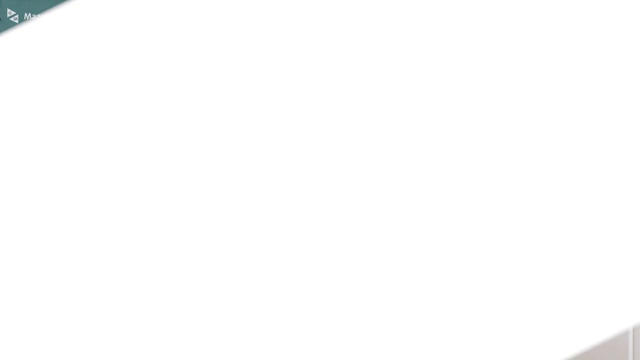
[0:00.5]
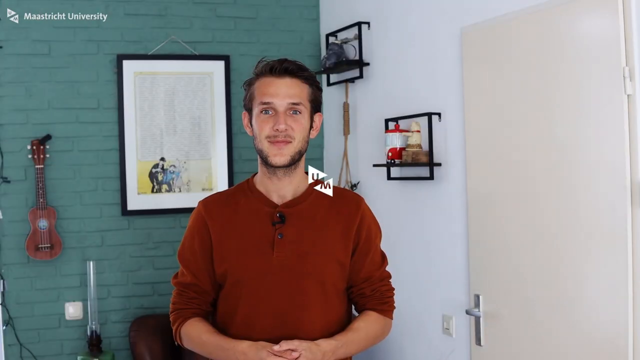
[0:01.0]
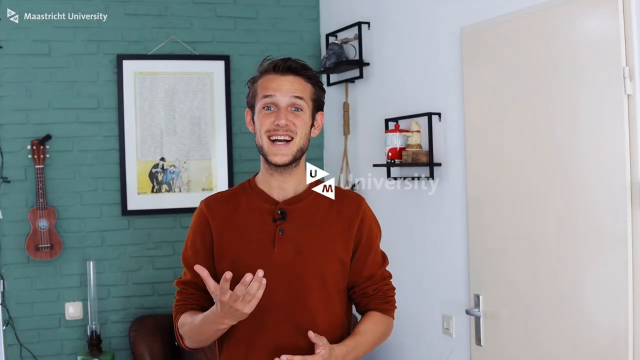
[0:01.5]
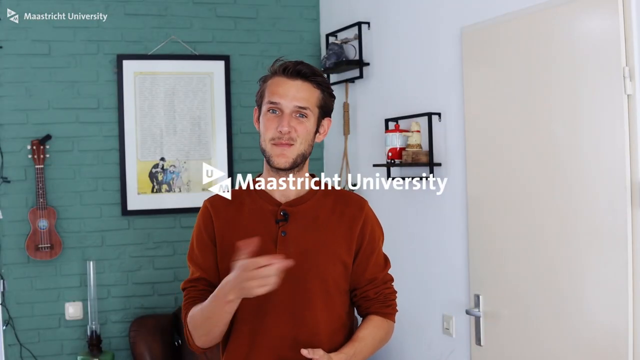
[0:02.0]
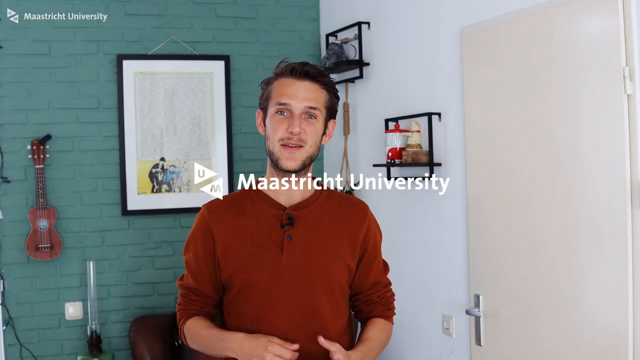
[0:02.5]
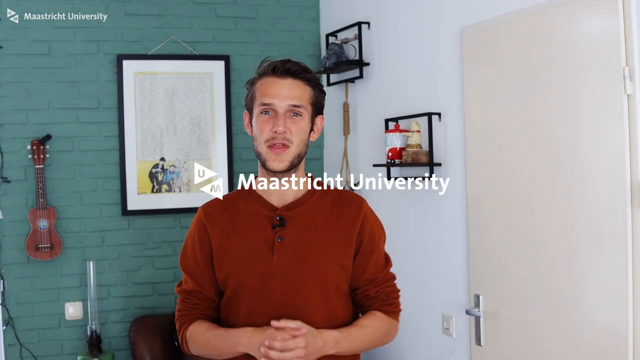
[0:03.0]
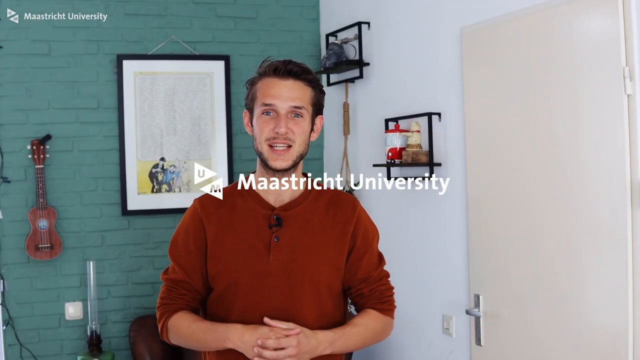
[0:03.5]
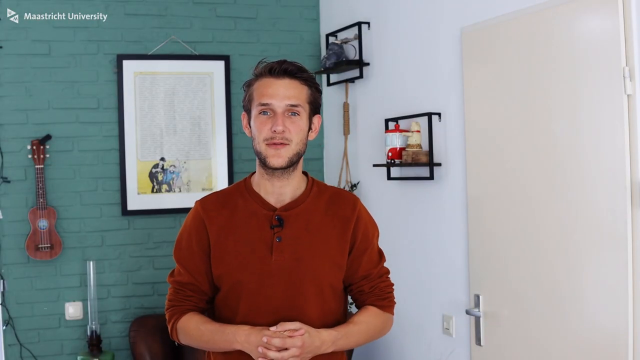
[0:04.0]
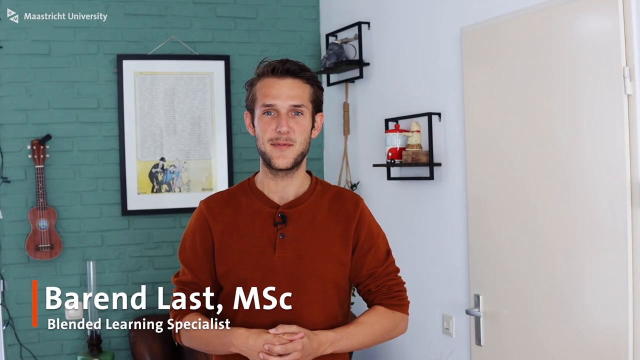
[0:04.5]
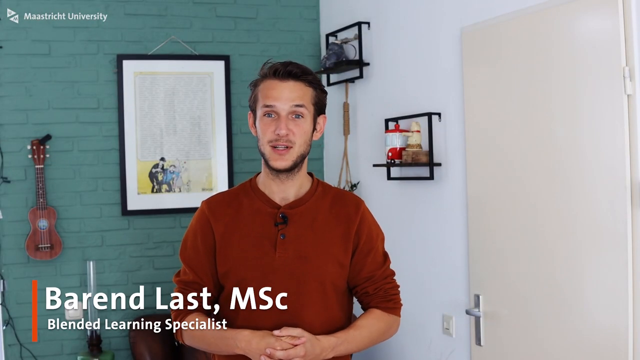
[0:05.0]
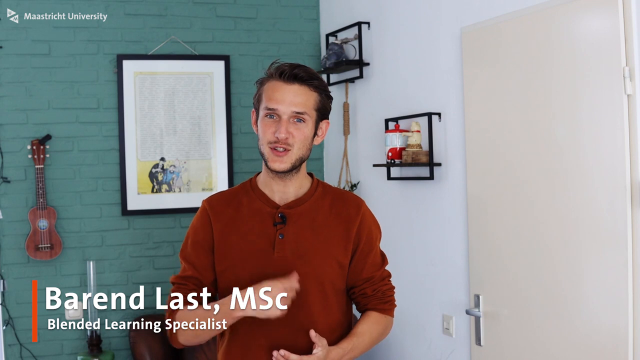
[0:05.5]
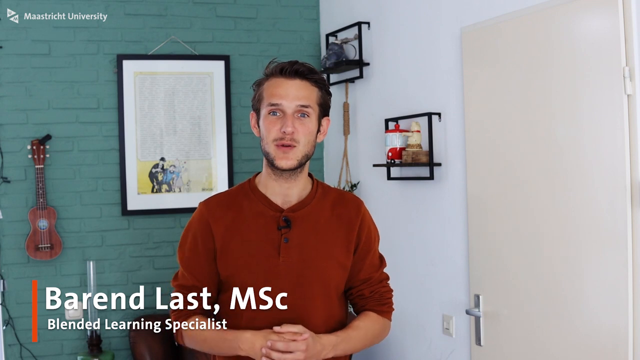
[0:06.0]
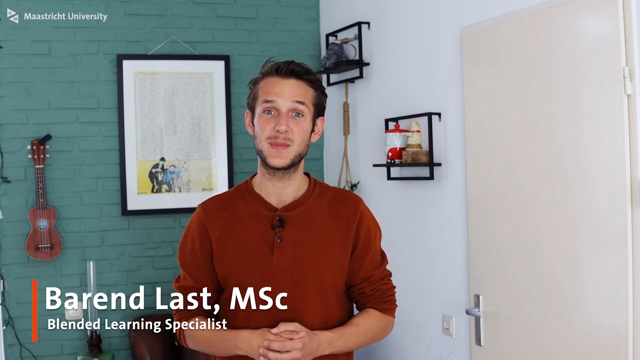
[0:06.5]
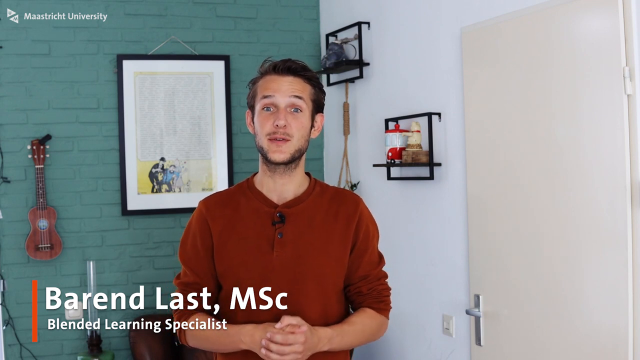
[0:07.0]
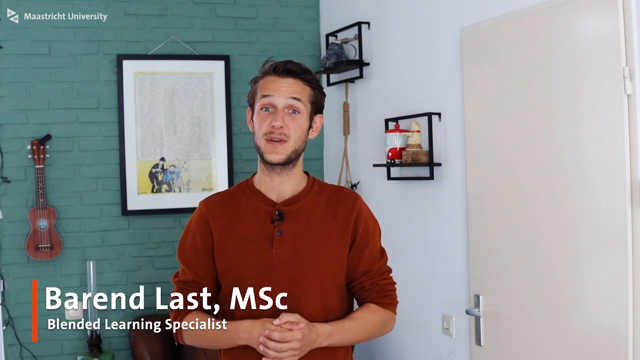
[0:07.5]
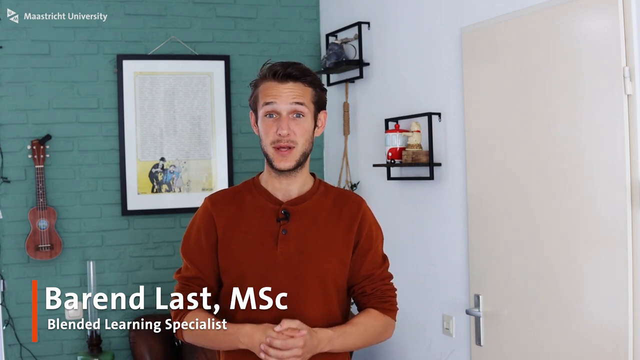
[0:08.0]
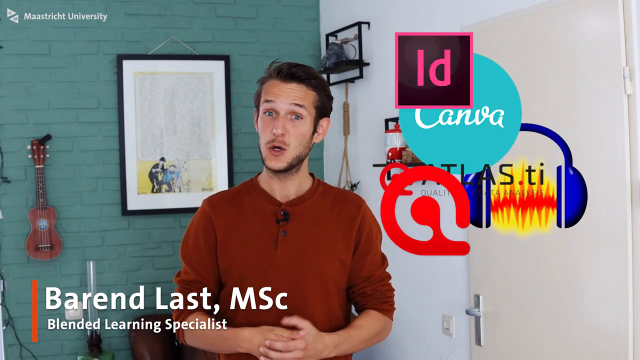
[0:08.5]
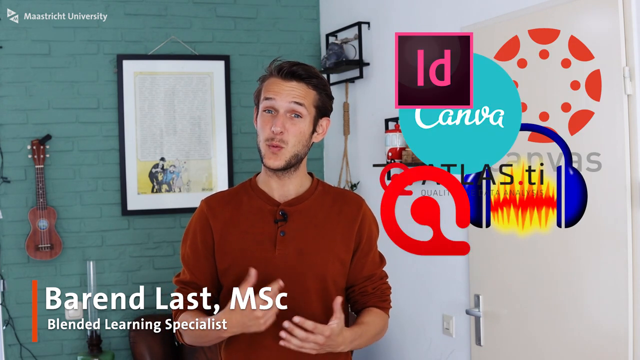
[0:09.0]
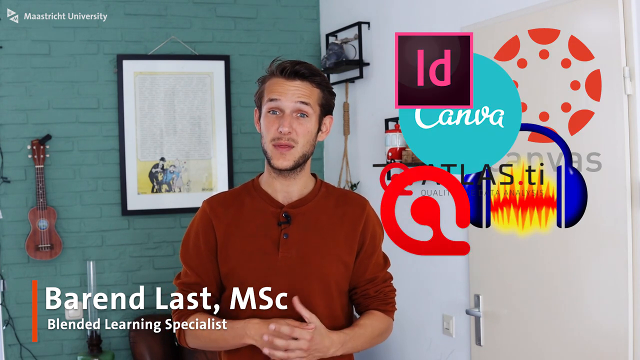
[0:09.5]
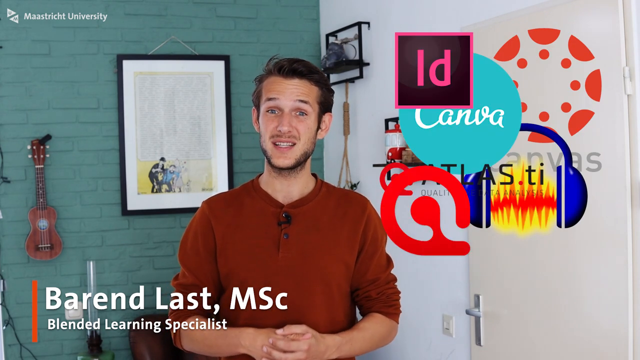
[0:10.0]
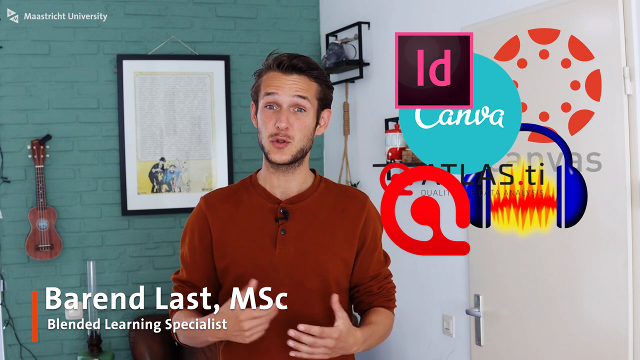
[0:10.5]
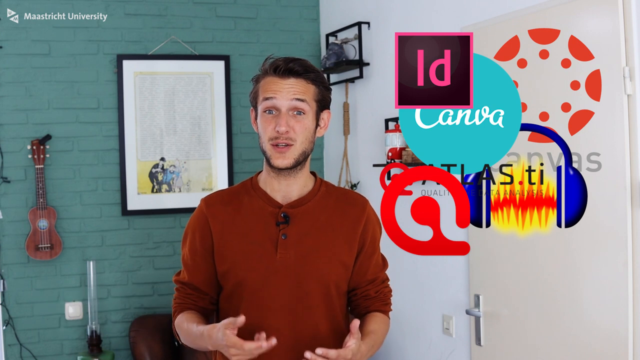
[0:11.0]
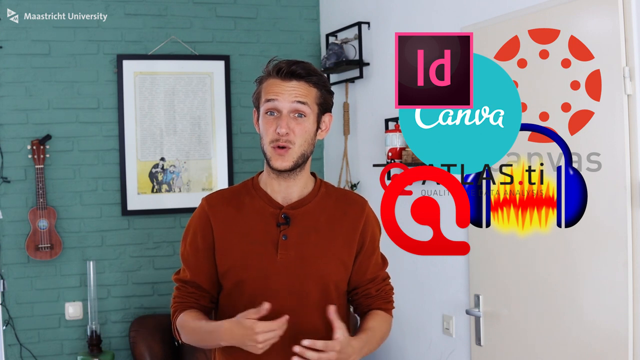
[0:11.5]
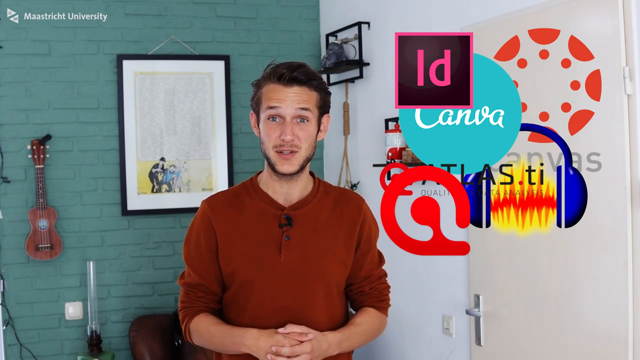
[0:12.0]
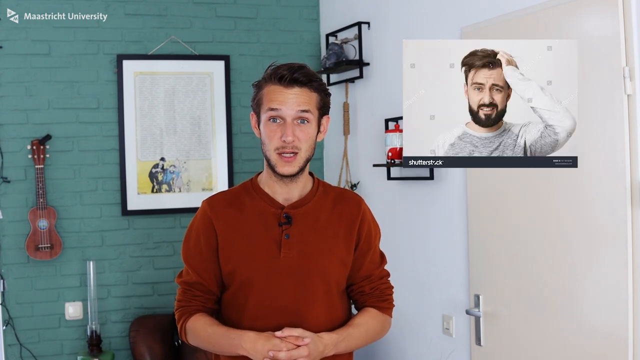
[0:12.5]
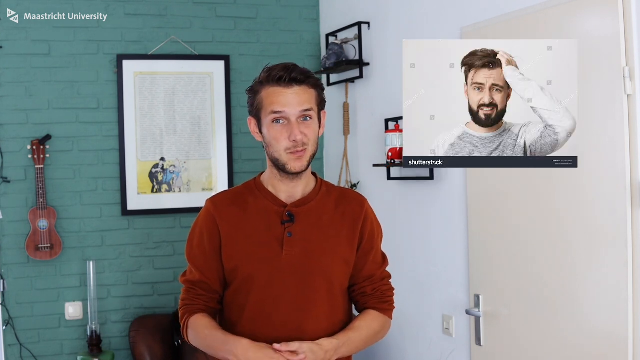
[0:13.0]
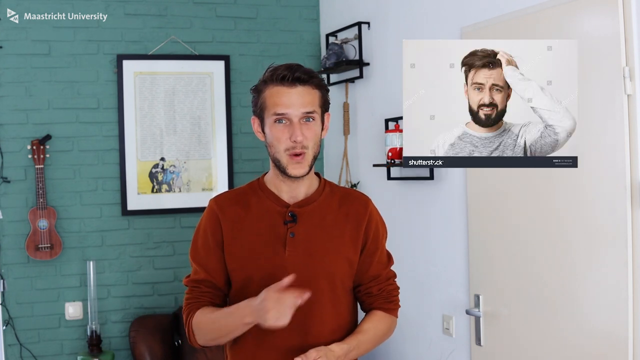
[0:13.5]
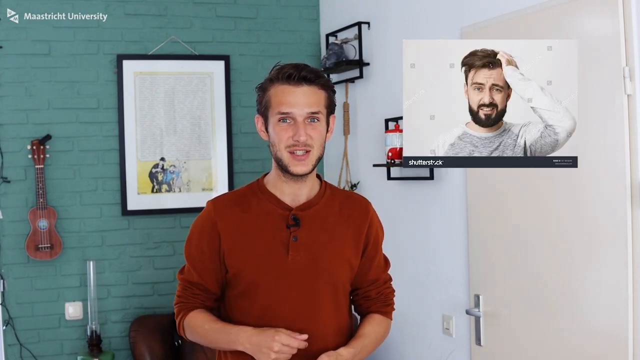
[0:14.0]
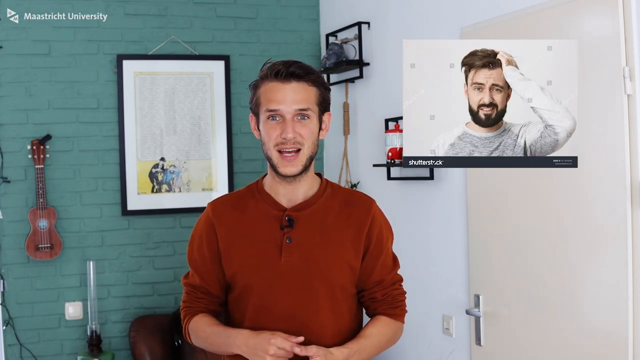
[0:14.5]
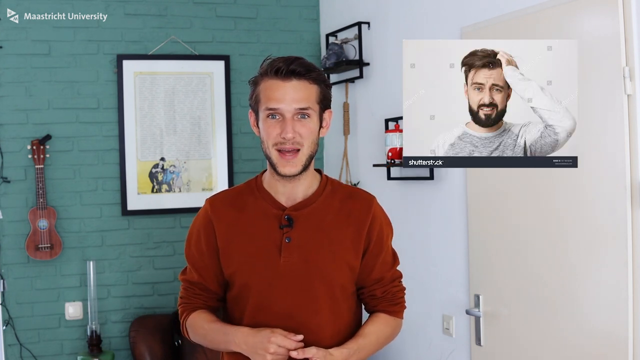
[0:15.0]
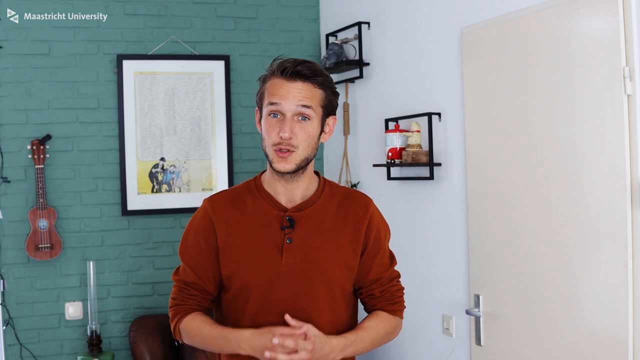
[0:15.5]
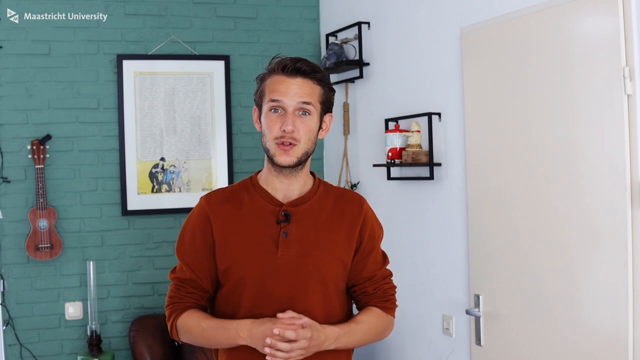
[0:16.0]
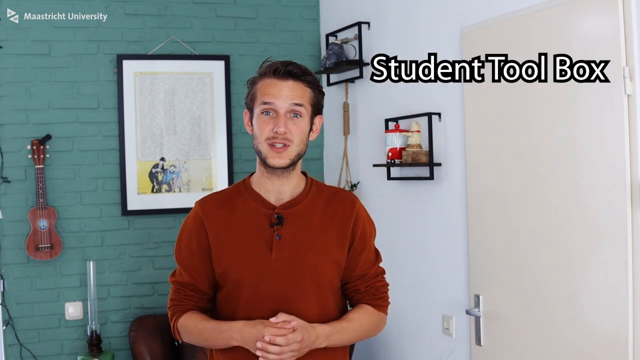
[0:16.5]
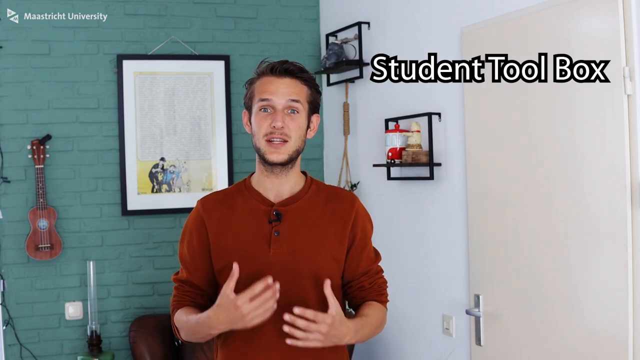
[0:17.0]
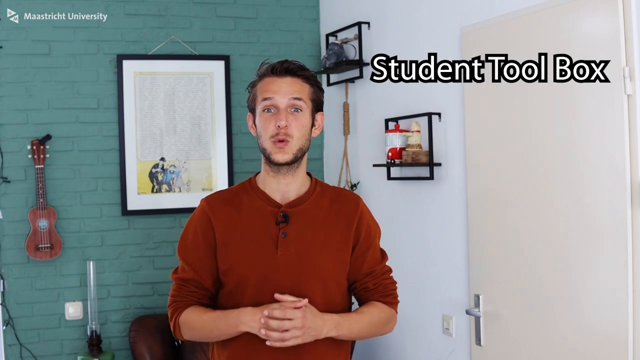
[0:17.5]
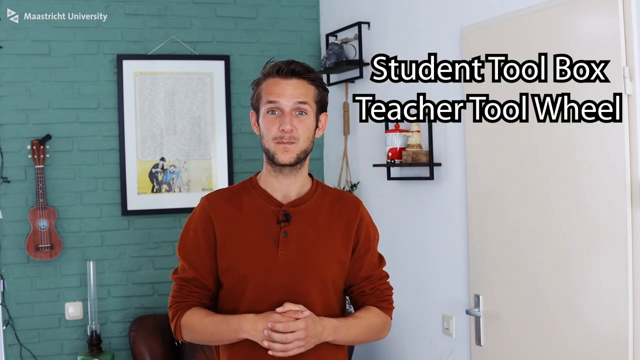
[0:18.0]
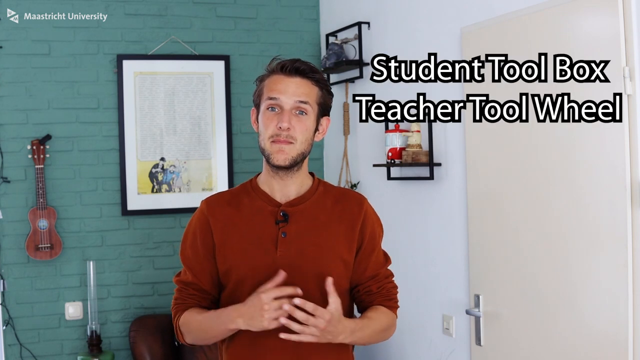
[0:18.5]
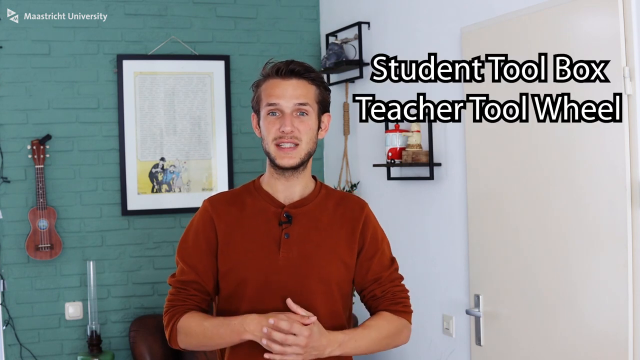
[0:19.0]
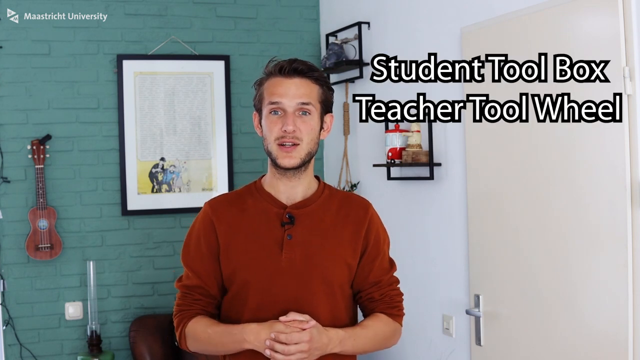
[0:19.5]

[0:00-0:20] The video opens on a wide frame, and the top left and bottom right corners close in toward the middle, revealing a man standing in a room. He wears a burnt orange long-sleeve top bunched up at the elbows. One wall of the room is white, and the other looks like a light teal brick wall, with some art and trinkets all over the place. He is speaking, and a logo in the middle reads "from Maastricht University". He points toward the camera with his right hand and seems very upbeat and energetic. He holds his hands in front of him with his fingers interlocked, and then his name and credentials appear at the bottom left: "Baron Lost MSC, blended learning specialist". His eyebrows are raised, and he lets go of his hands to gesture. Logos of some applications, such as Canva and an audio player of some sort, appear on his left. His credentials and the logos then disappear, and the logos are replaced by an image of a man with brown hair and some facial hair who looks confused as he scratches his head with his left hand. The speaker keeps gesturing, pointing toward the camera with his right hand. At the top right, white text with a black outline reads "student toolbox", and another line reads "teacher tool wheel".